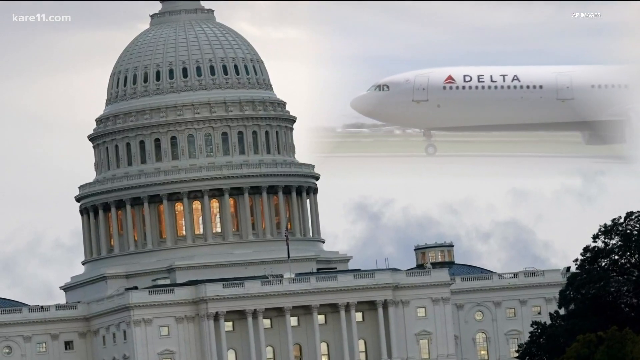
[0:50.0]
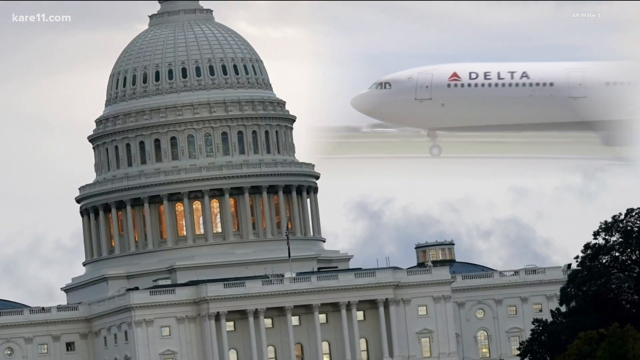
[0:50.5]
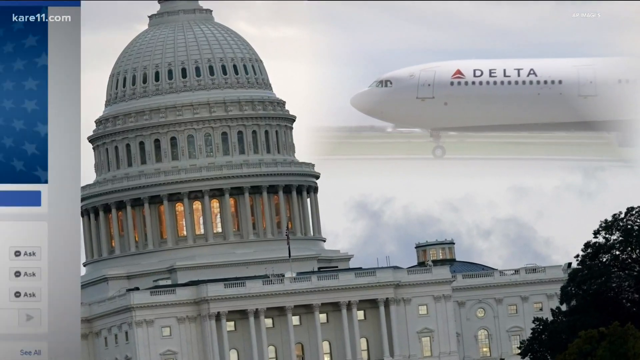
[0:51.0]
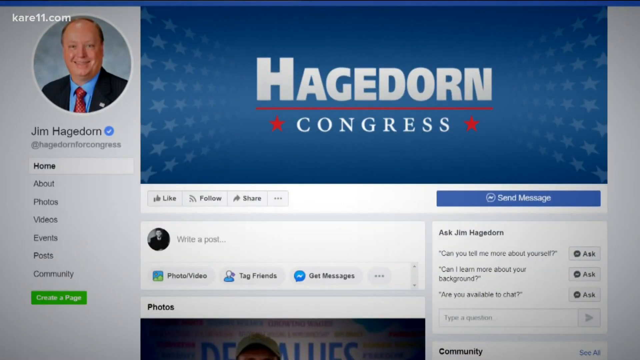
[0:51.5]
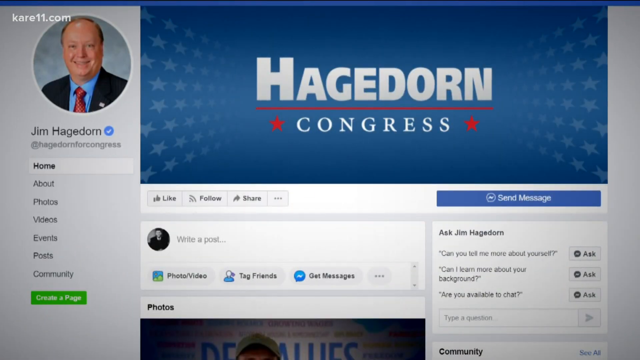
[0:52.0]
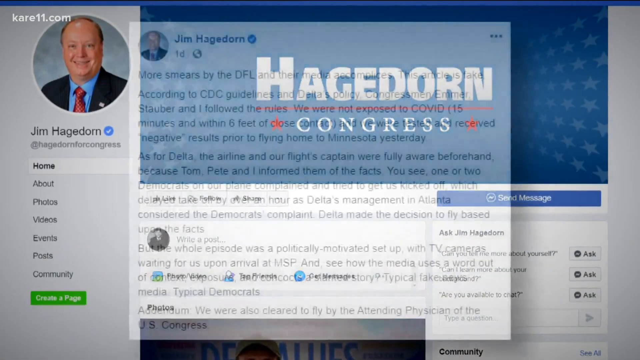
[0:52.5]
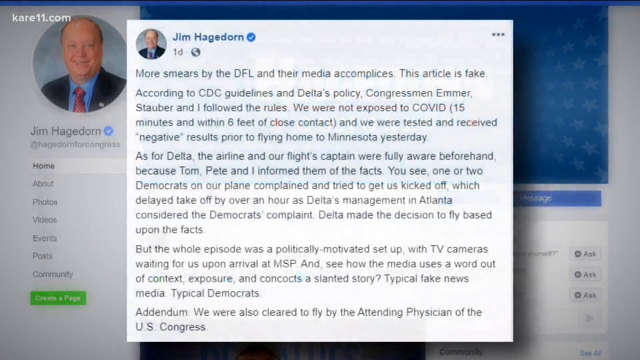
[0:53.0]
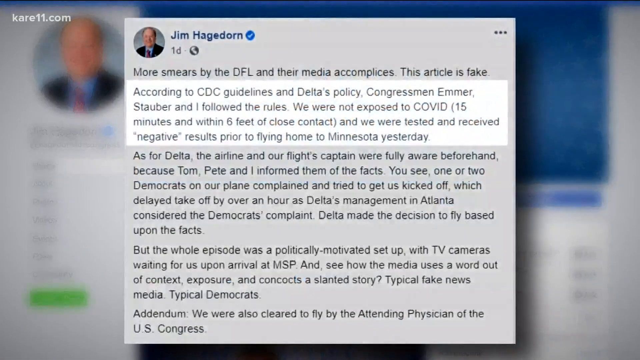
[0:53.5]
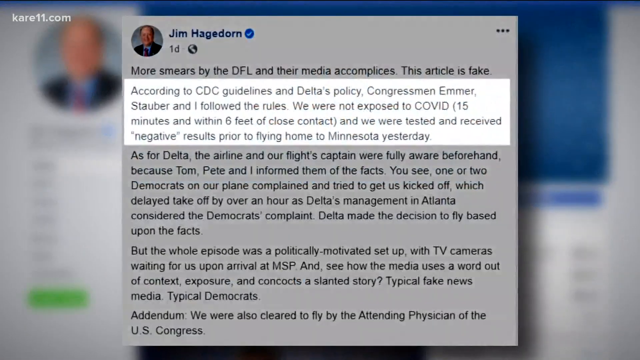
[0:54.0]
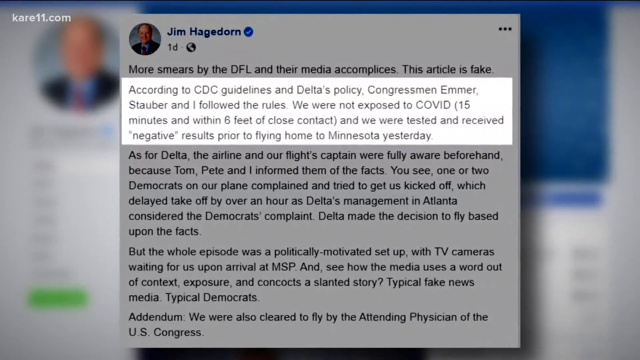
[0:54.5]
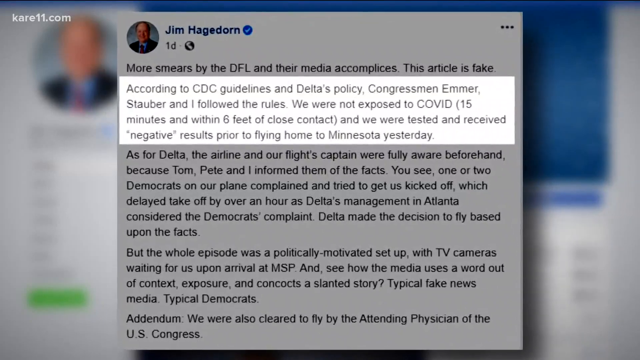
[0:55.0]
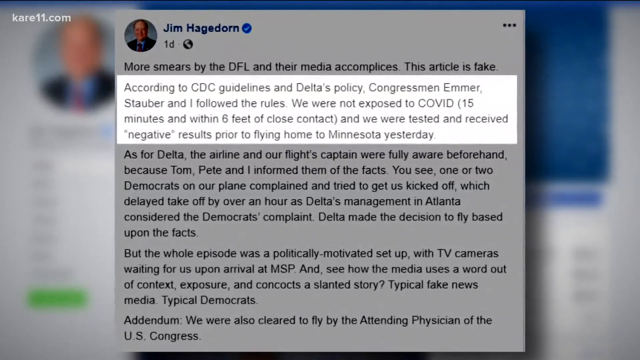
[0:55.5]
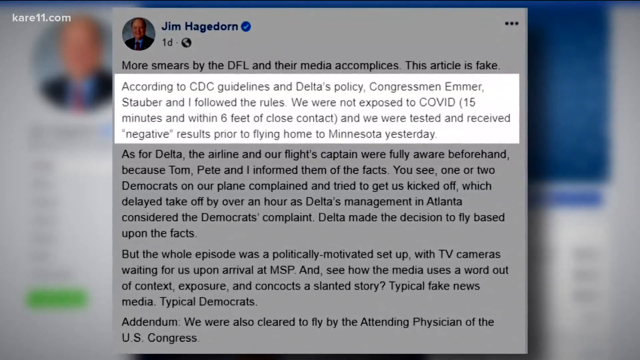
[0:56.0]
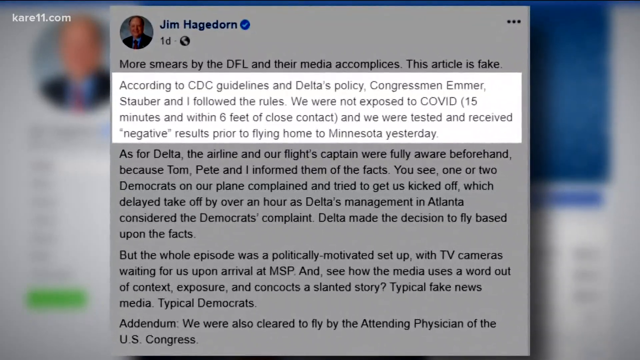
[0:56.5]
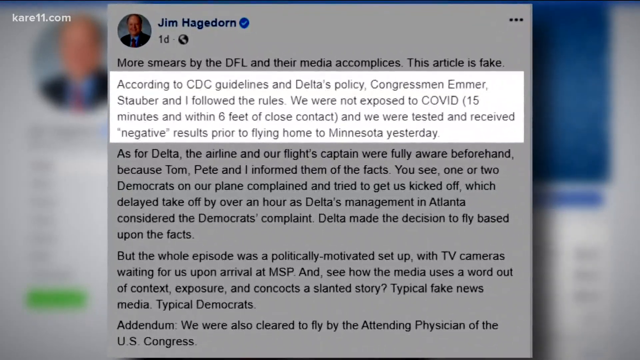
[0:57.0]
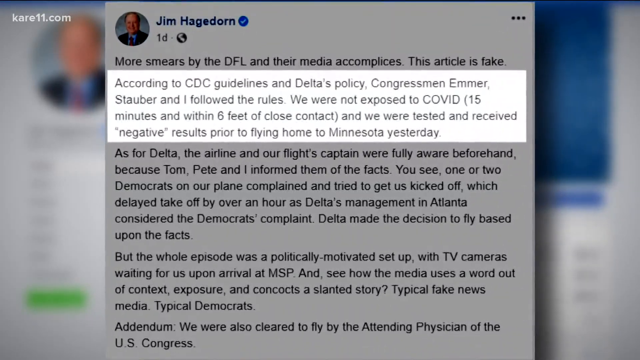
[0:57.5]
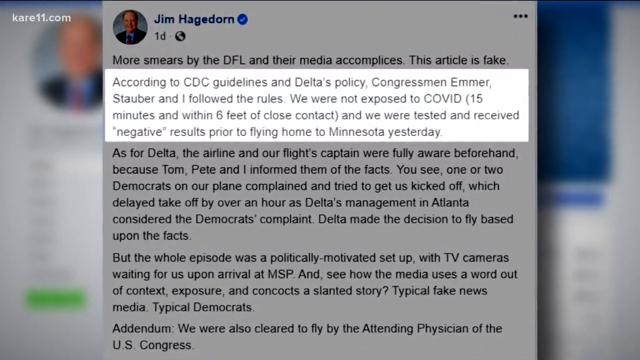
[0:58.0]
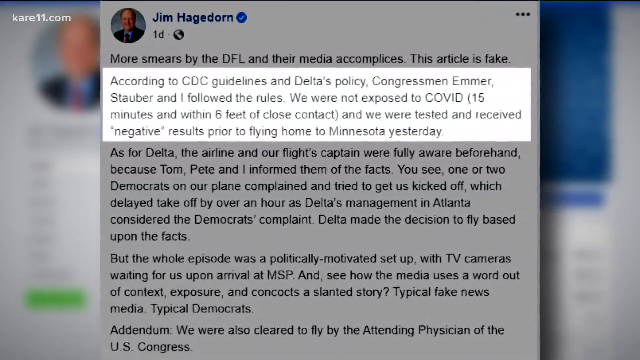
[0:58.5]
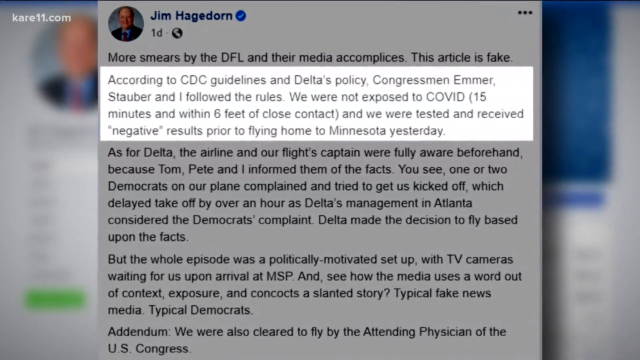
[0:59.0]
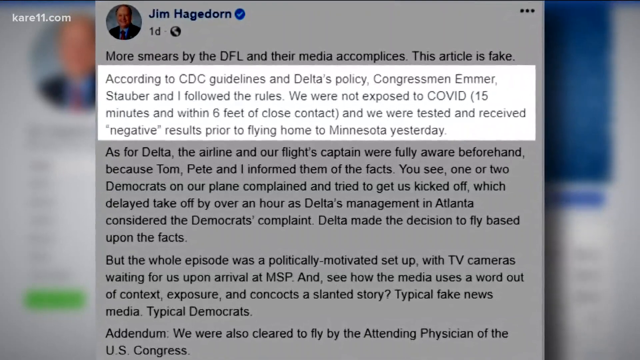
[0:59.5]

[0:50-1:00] An image shows Congress on the left side and a Delta airplane on the right side. The video then moves to Jim Hagedorne's verified Facebook page, focusing on the text: "According to CDC guidelines and Delta's policy, Congressman Elmer Stauber and I follow the rules. We were not exposed to COVID-19 within 15 minutes and within six feet of close contact and we were tested and received negative results prior to flying home to Minnesota yesterday." The view then zooms in on that page.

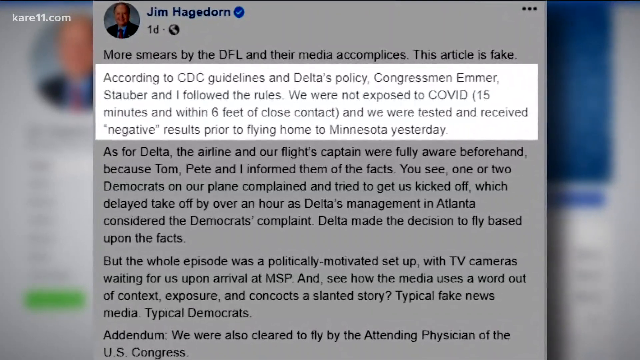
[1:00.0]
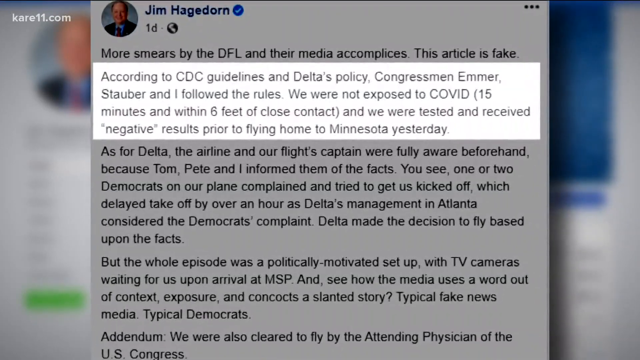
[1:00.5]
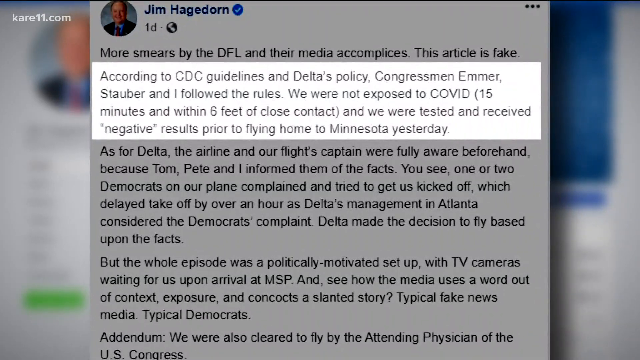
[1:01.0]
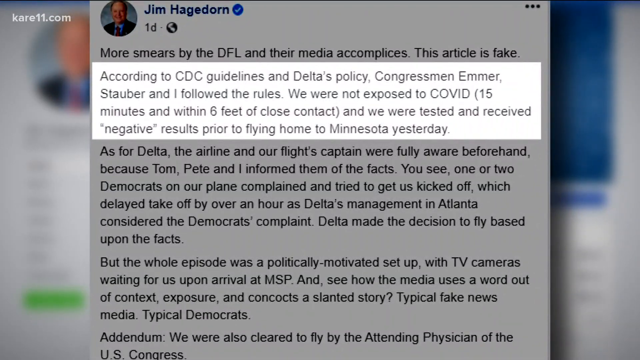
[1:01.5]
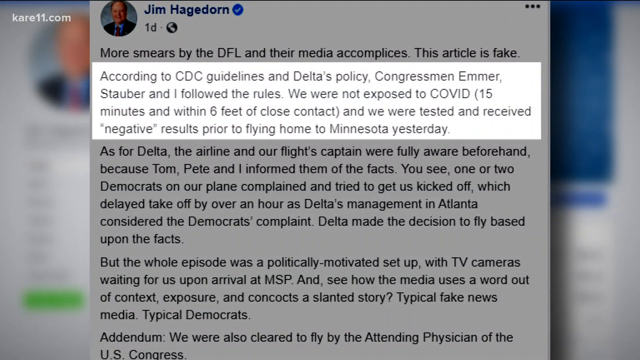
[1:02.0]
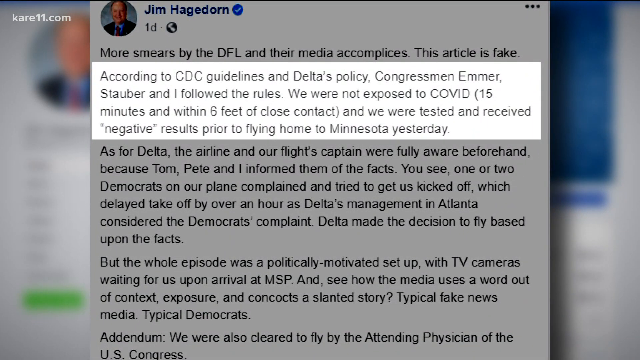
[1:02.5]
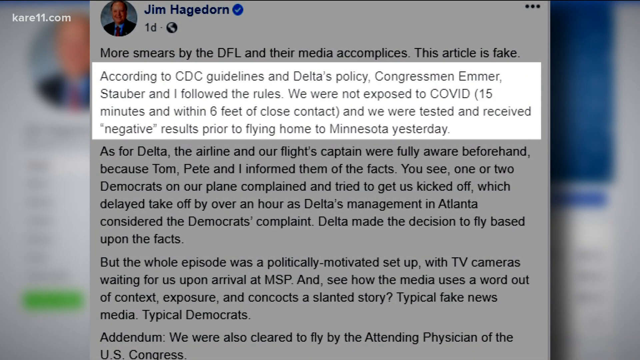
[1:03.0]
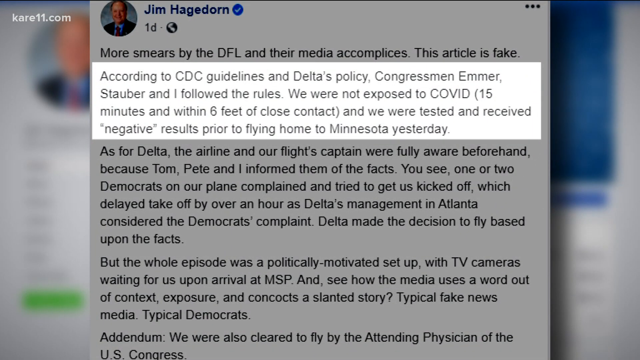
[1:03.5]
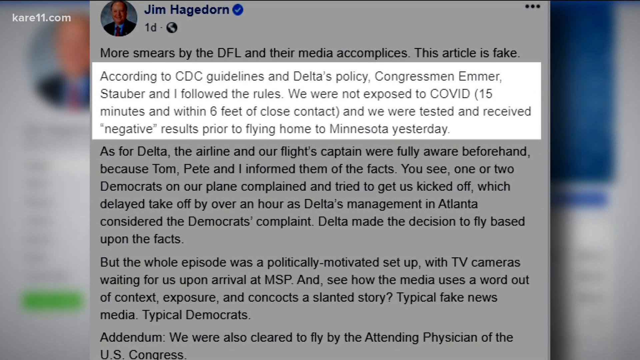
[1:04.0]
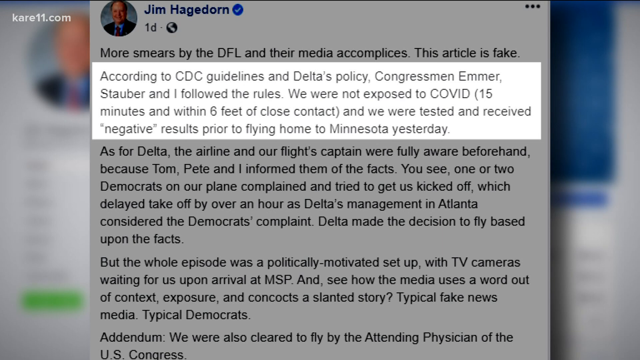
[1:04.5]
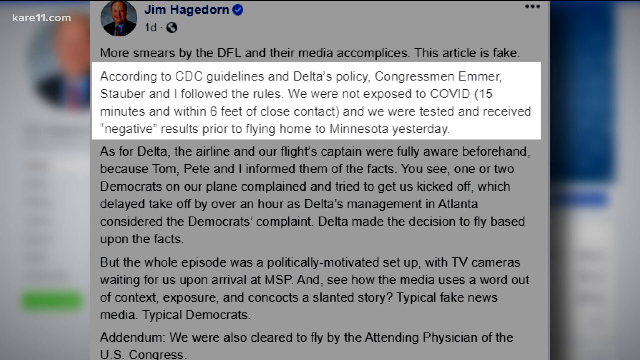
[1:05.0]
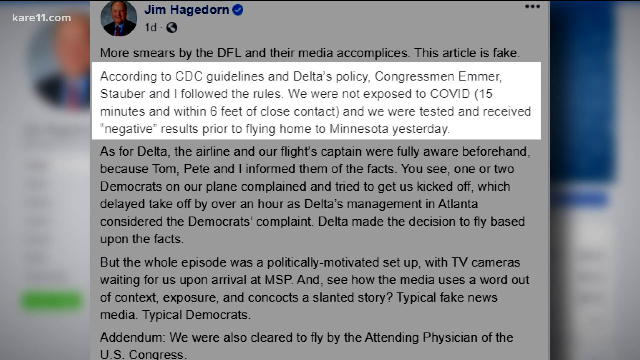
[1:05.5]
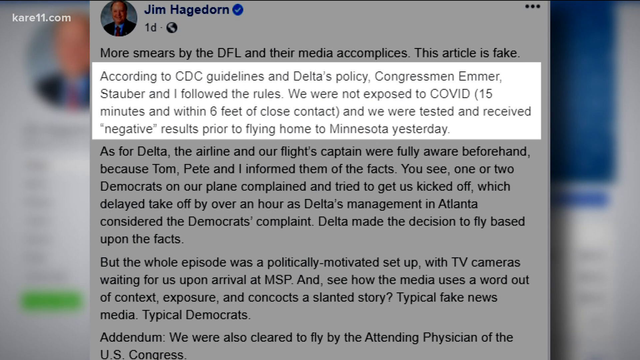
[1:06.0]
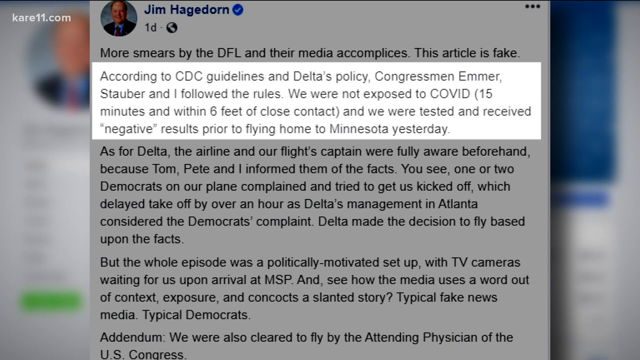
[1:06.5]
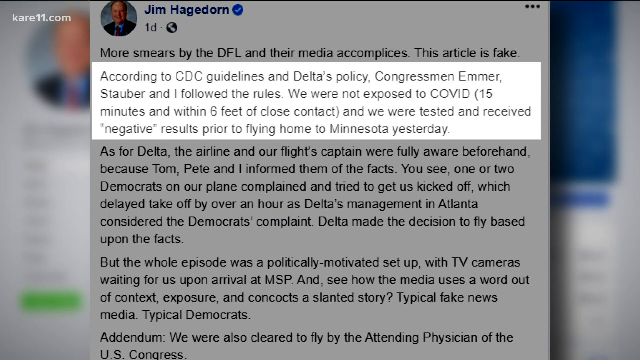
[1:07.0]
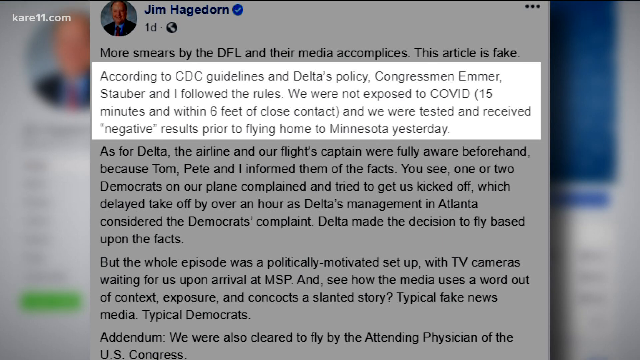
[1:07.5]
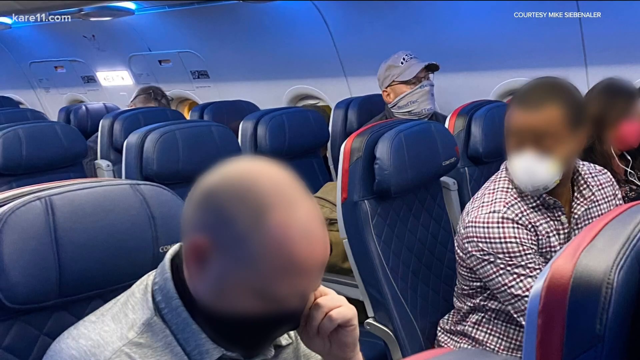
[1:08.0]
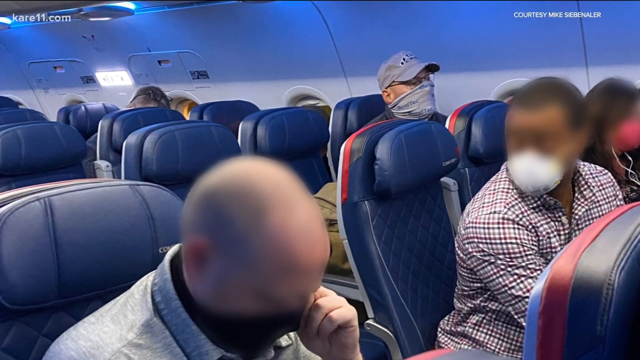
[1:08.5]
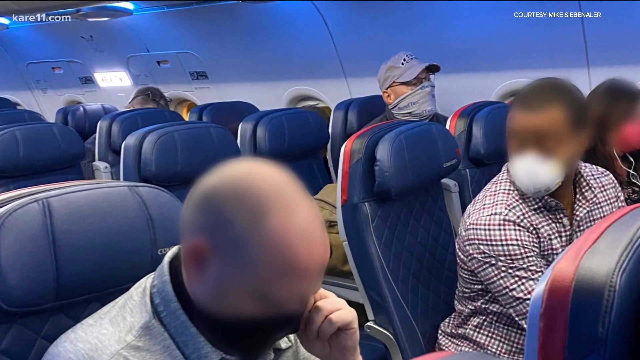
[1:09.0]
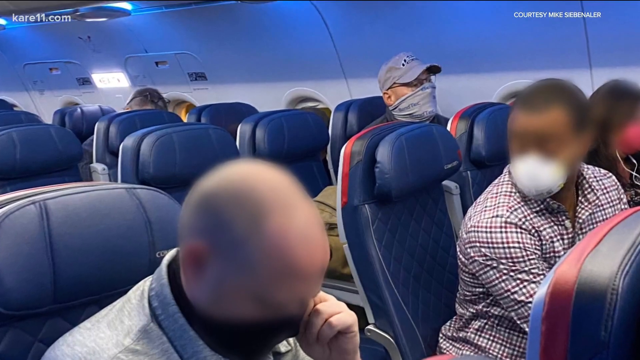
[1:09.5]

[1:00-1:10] The video leaves the Facebook page and returns to the inside of the plane, where individuals wearing masks are seated. The seating and the general background are very blue. It looks quite sanitary, with everyone sitting in an orderly fashion, wearing masks and paying attention.